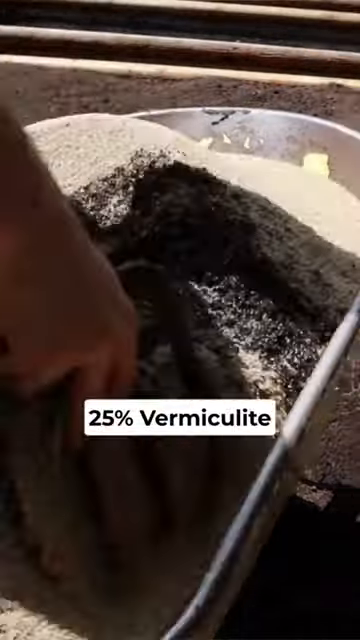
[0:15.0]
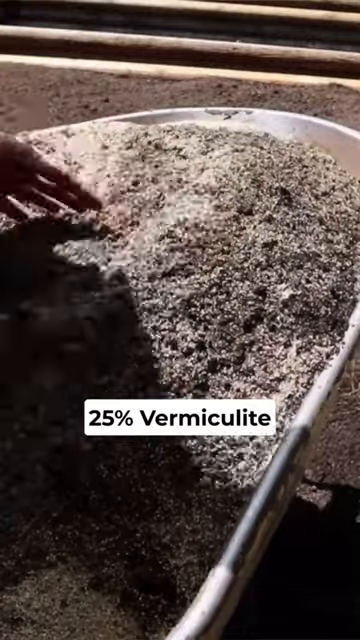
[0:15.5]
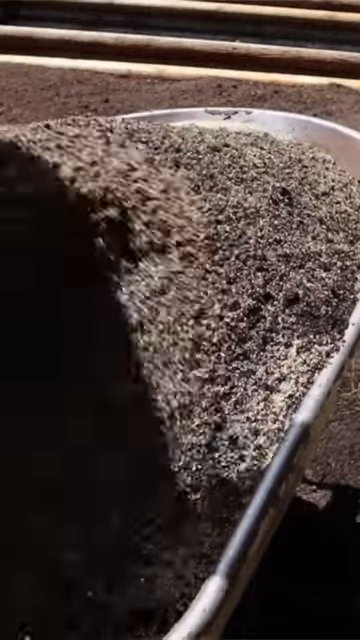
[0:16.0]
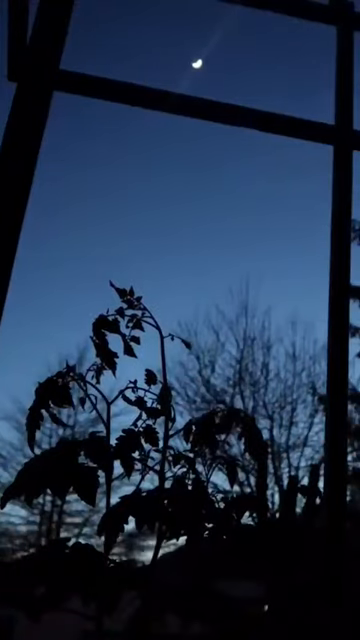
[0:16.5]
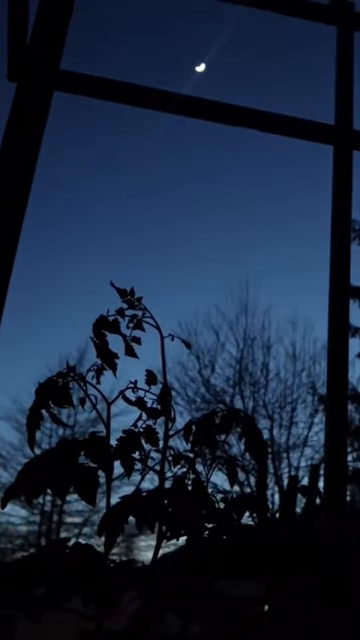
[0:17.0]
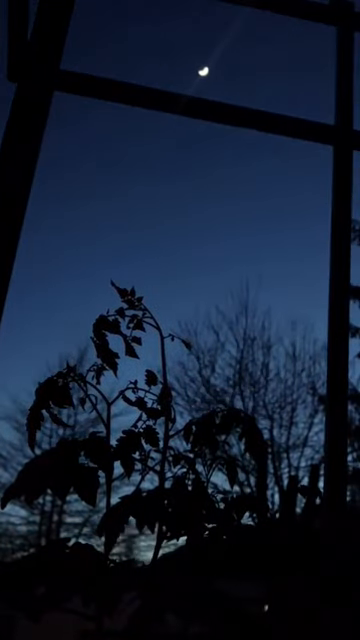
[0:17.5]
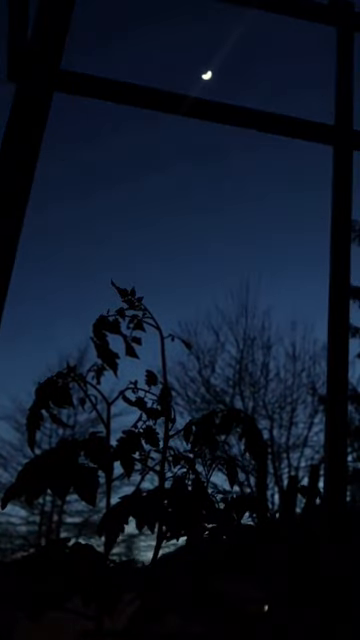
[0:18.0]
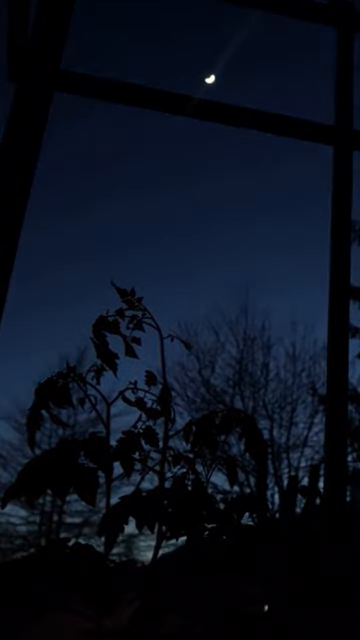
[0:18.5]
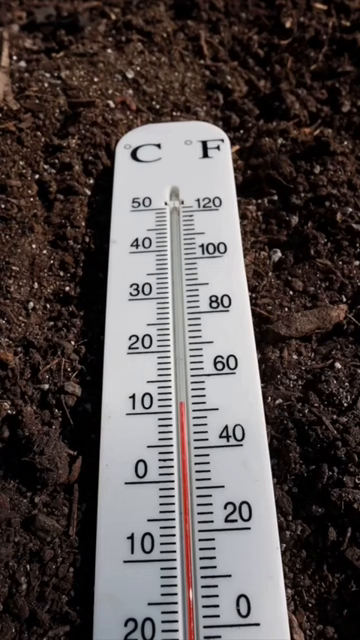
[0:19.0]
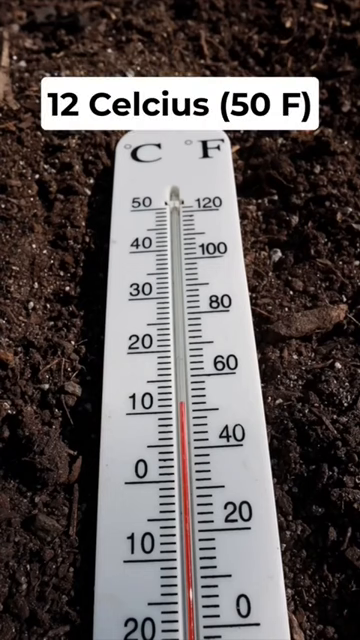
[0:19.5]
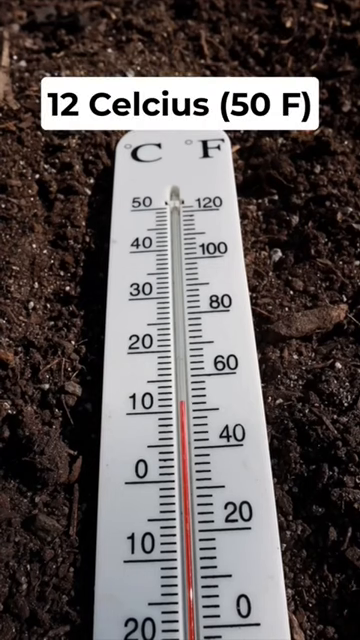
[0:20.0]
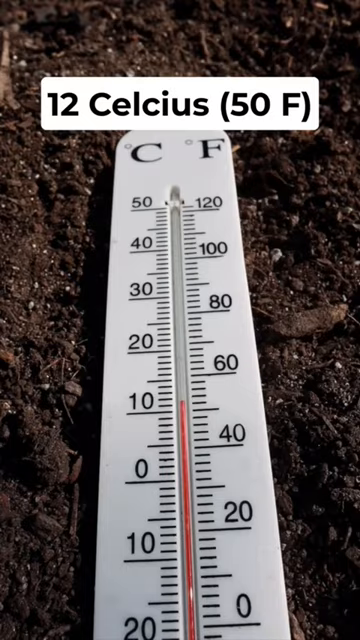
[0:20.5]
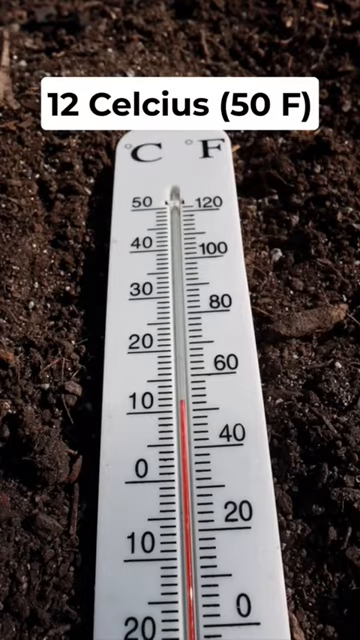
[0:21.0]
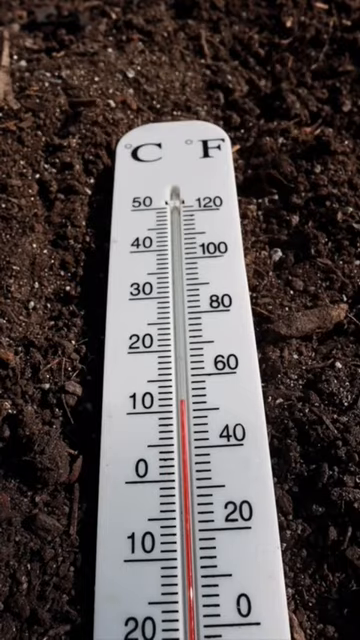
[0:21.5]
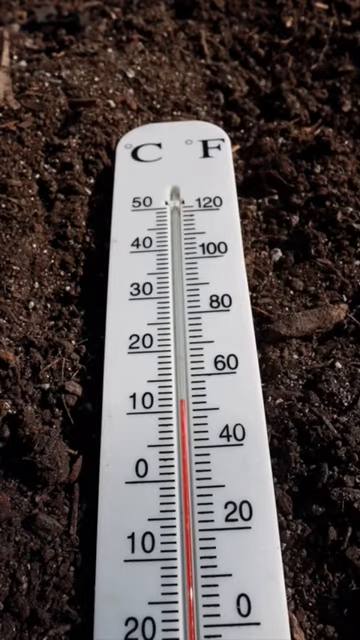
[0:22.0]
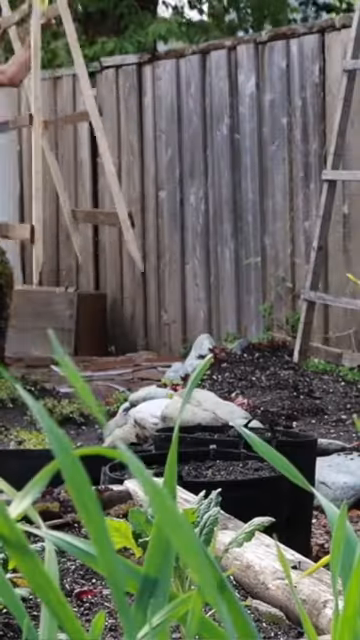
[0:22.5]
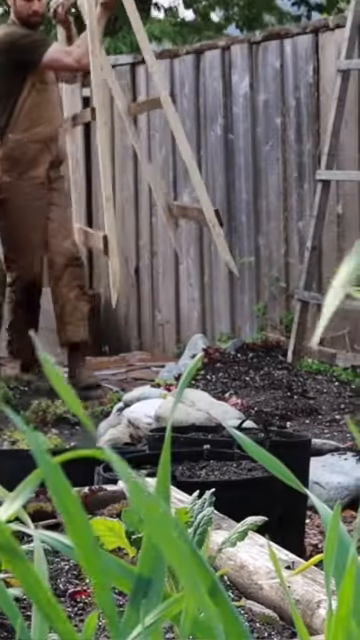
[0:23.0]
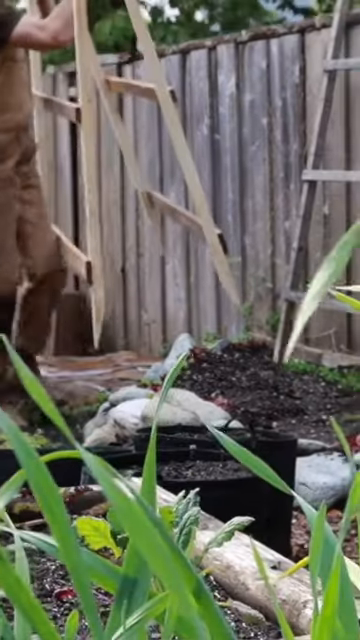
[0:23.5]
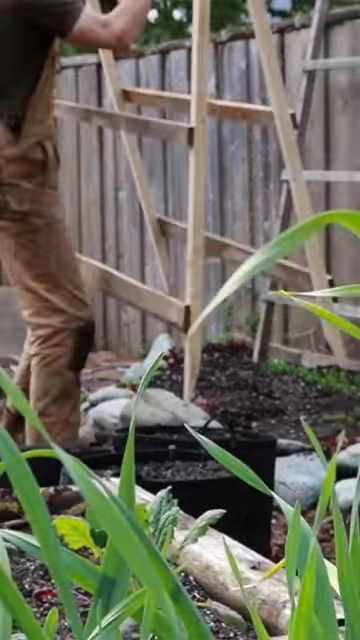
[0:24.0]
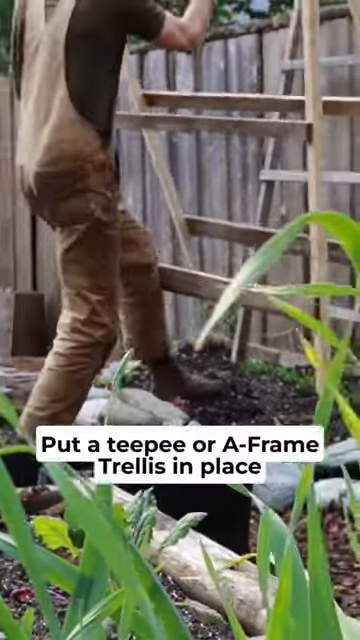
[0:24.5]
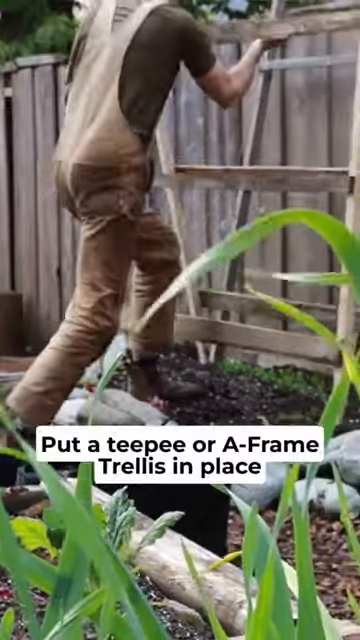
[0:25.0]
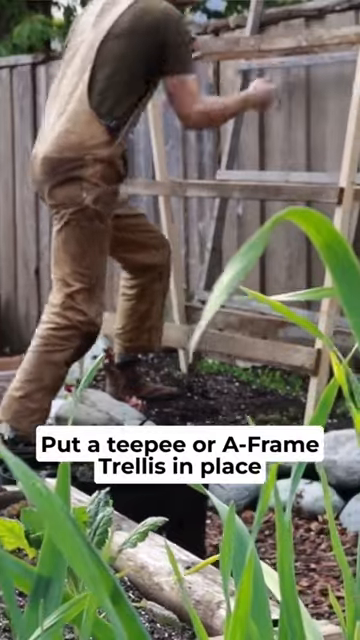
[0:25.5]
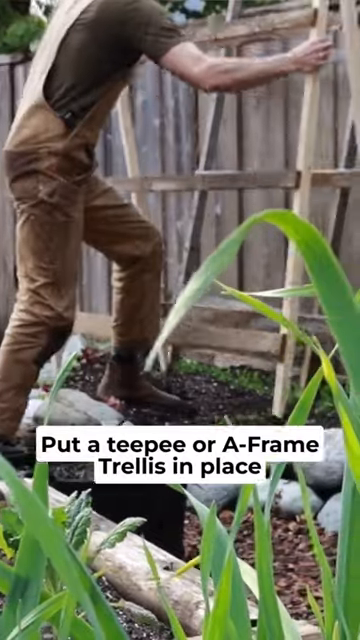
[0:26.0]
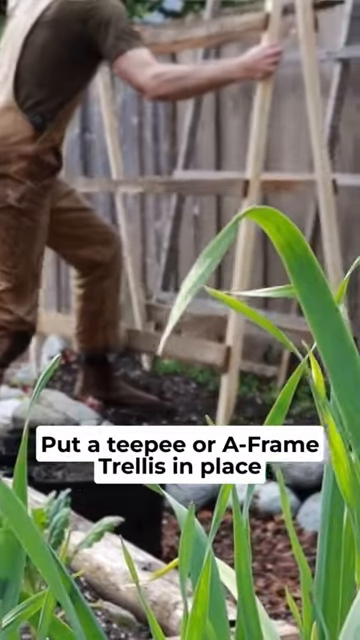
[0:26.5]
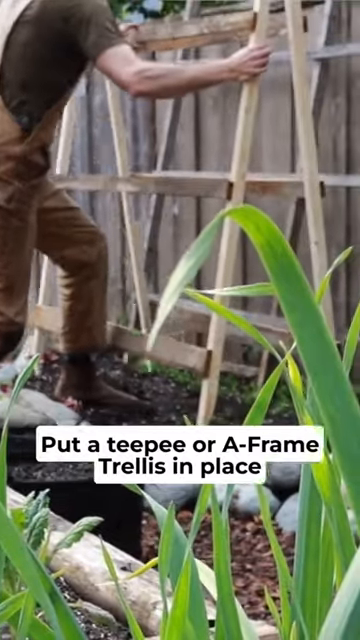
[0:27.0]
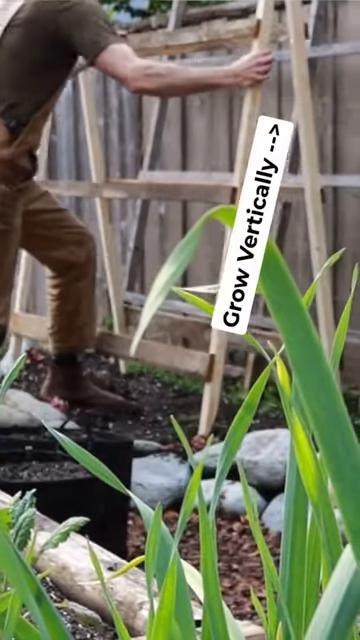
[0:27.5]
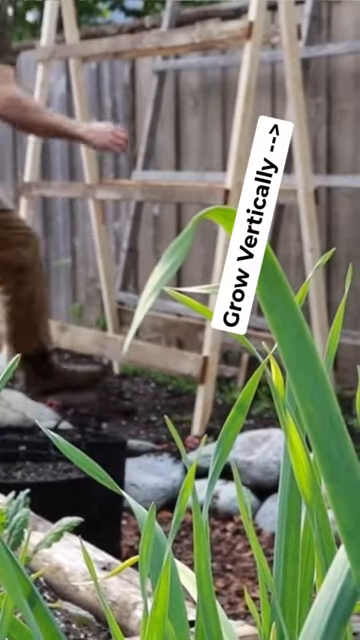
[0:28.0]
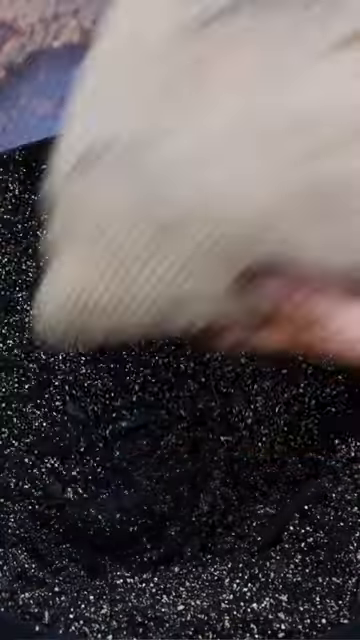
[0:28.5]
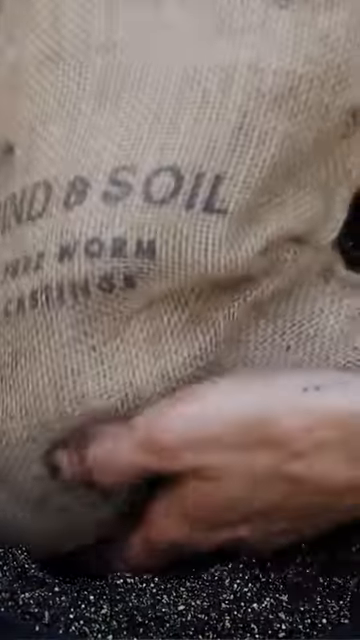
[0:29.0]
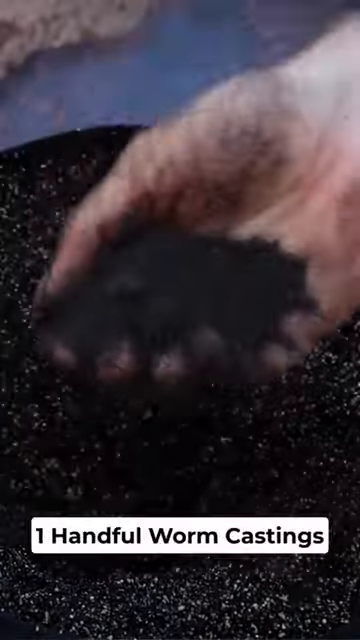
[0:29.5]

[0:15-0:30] The temperature is shown, apparently indicating it should not be less than 50 degrees. A man builds something like trellises along a fence, a teepee or A-frame trellis next to the fence for growing the plants vertically. He mixes the compost and the vermiculite.